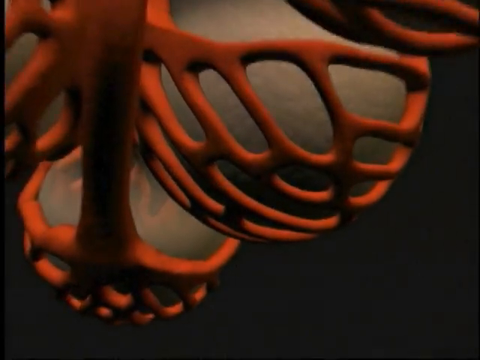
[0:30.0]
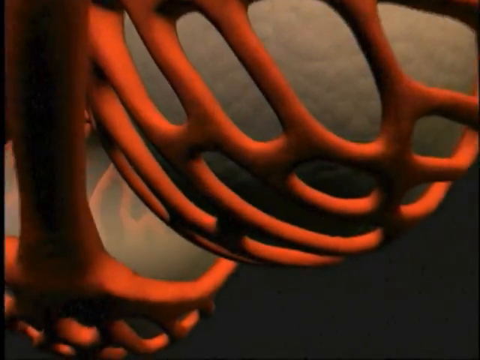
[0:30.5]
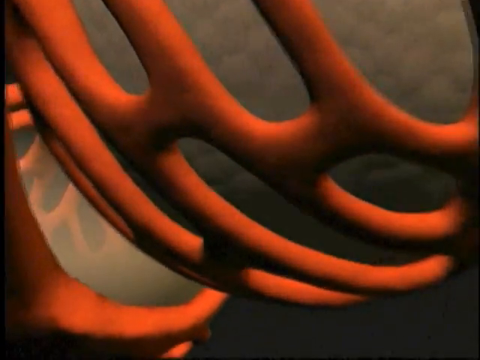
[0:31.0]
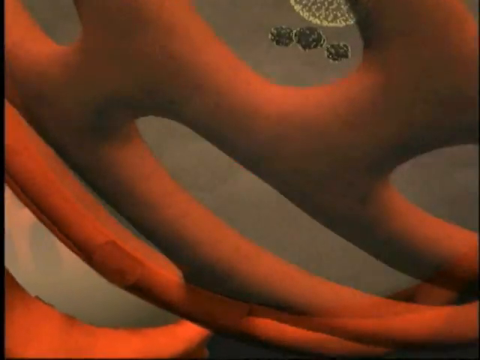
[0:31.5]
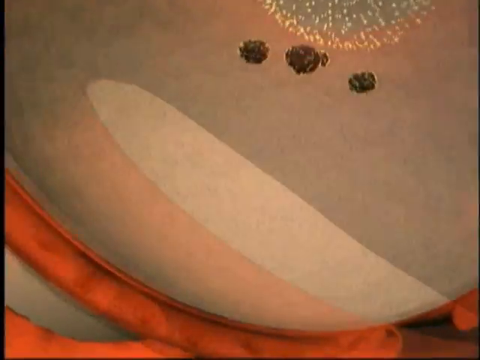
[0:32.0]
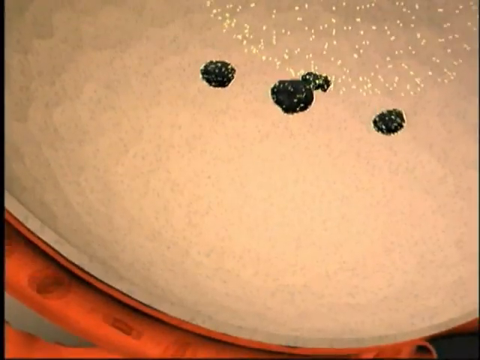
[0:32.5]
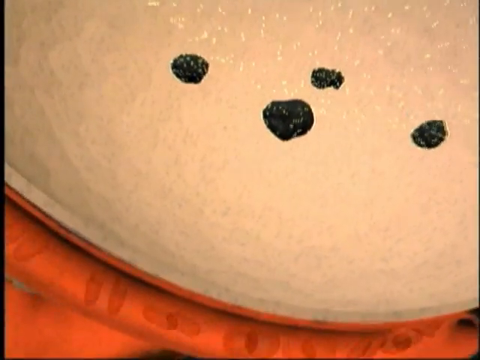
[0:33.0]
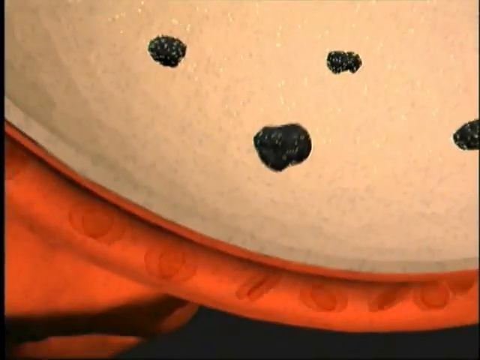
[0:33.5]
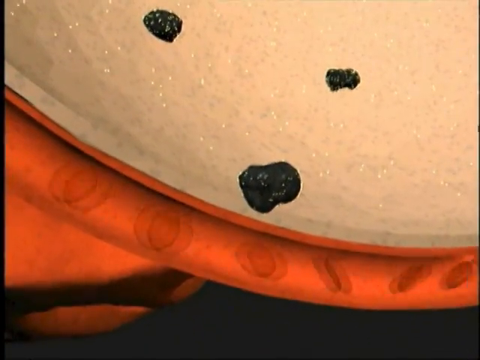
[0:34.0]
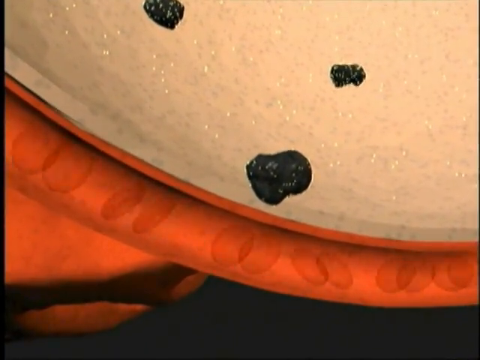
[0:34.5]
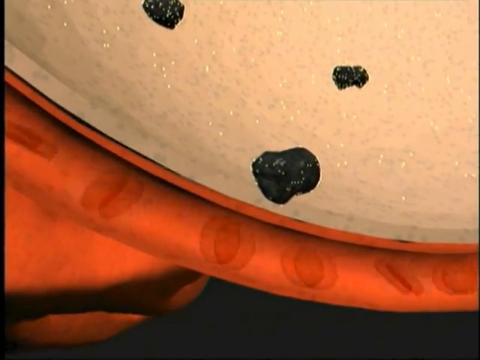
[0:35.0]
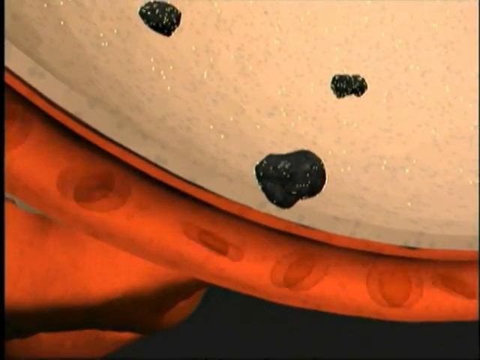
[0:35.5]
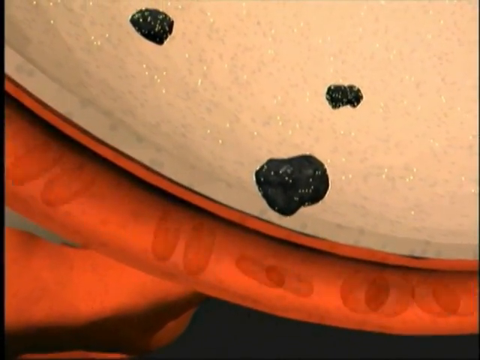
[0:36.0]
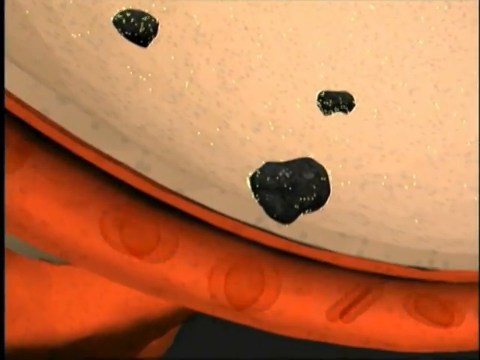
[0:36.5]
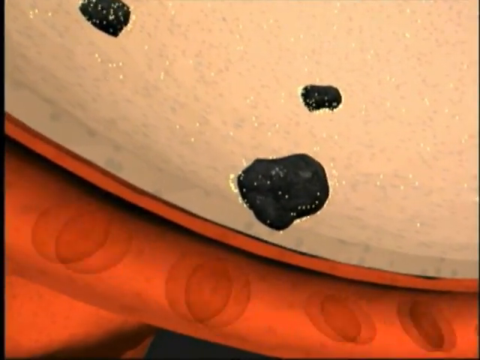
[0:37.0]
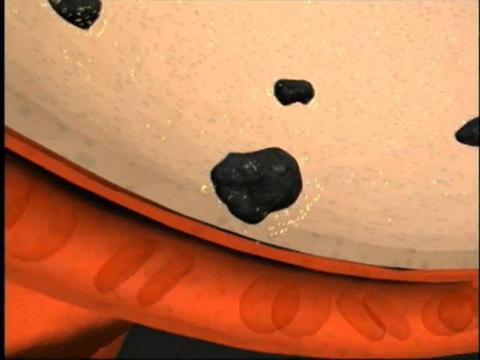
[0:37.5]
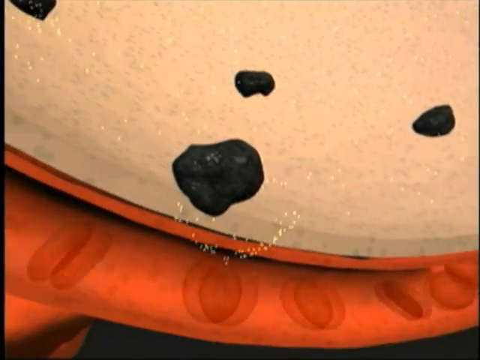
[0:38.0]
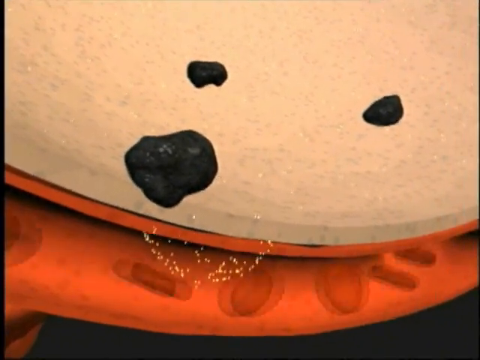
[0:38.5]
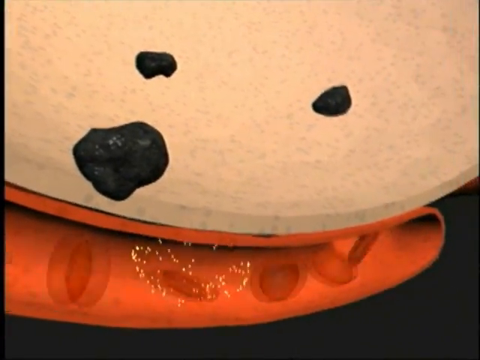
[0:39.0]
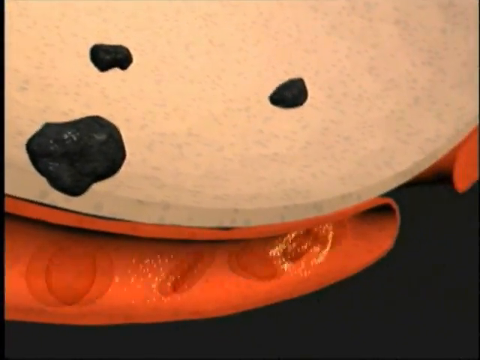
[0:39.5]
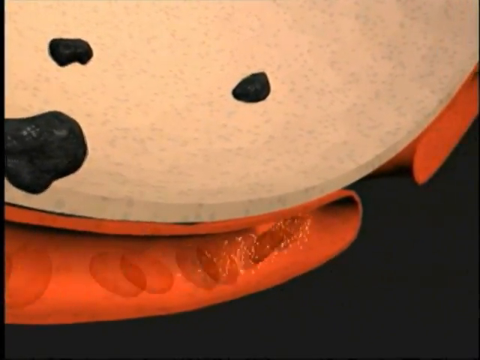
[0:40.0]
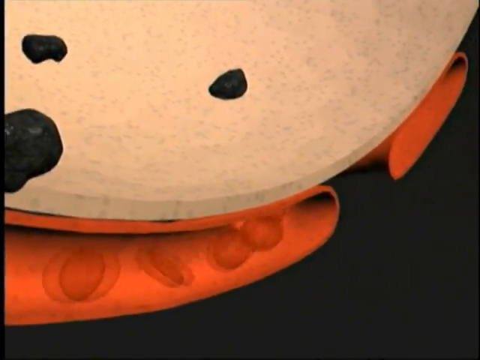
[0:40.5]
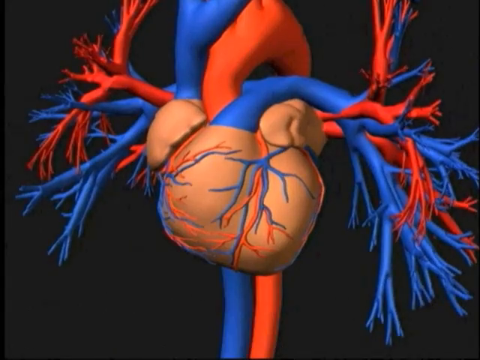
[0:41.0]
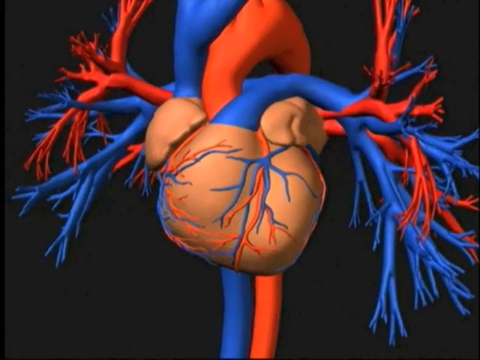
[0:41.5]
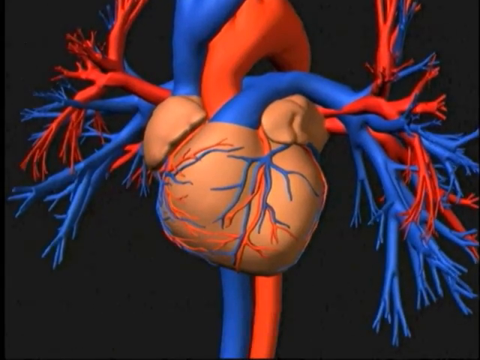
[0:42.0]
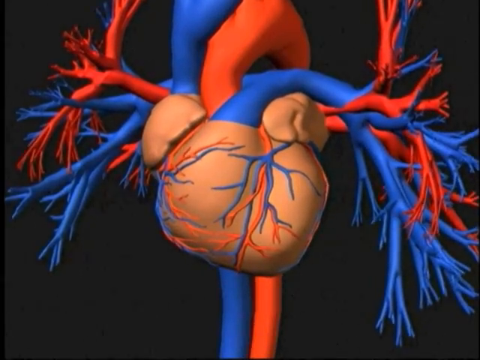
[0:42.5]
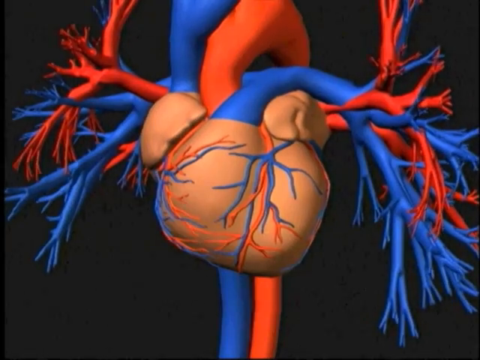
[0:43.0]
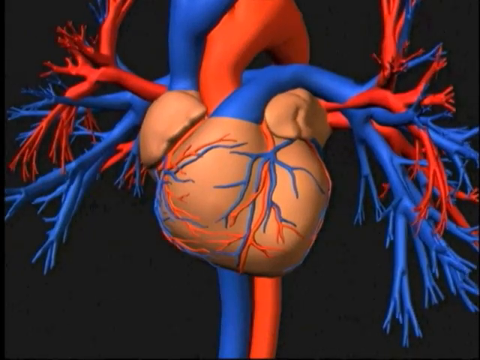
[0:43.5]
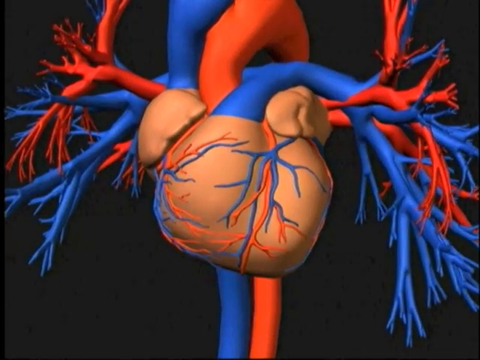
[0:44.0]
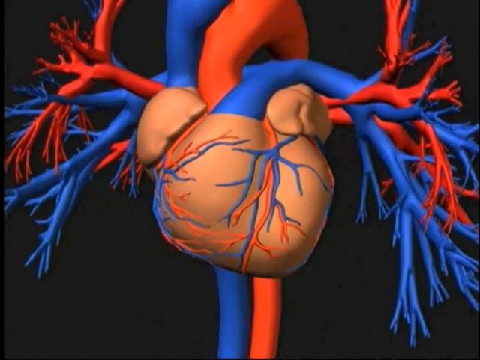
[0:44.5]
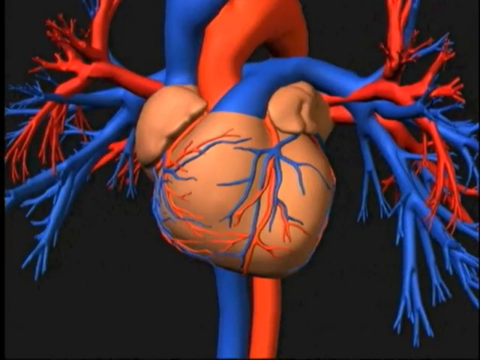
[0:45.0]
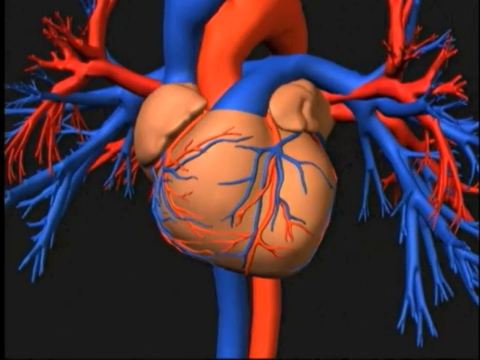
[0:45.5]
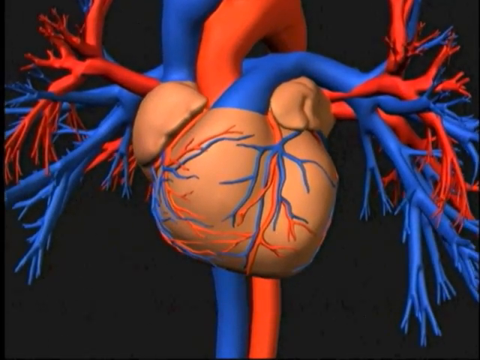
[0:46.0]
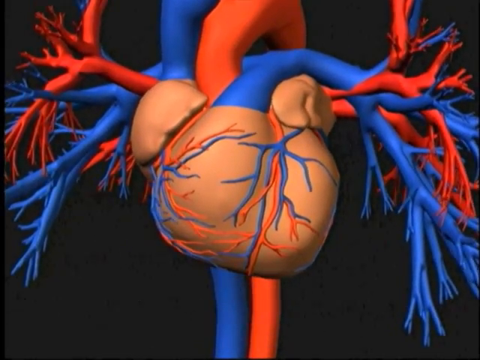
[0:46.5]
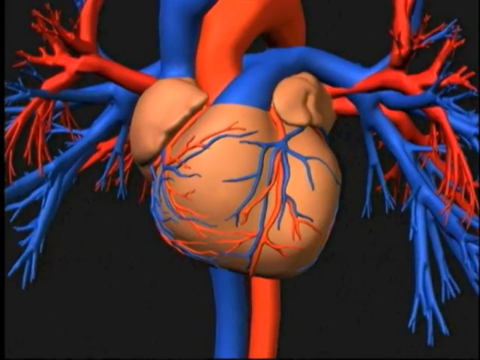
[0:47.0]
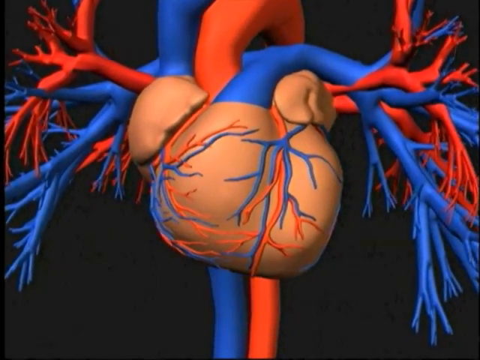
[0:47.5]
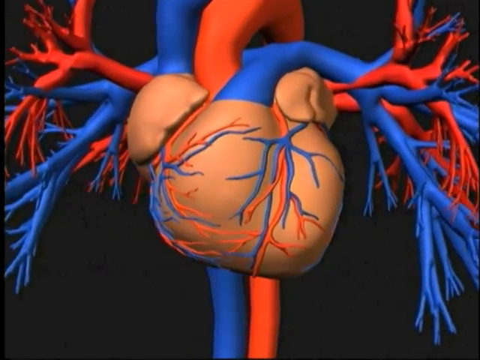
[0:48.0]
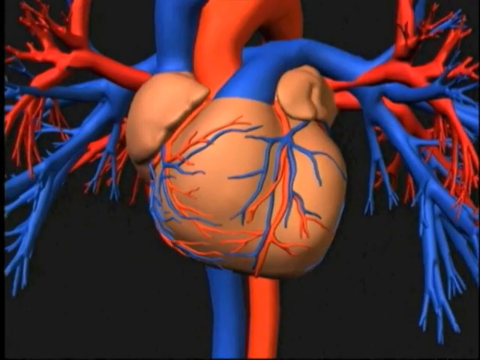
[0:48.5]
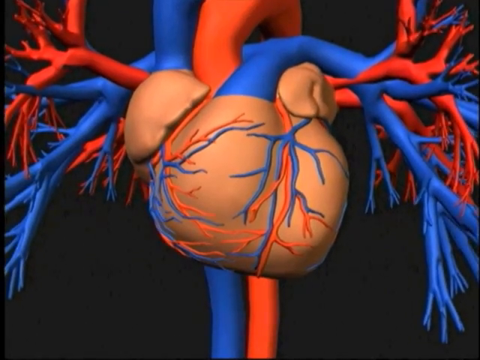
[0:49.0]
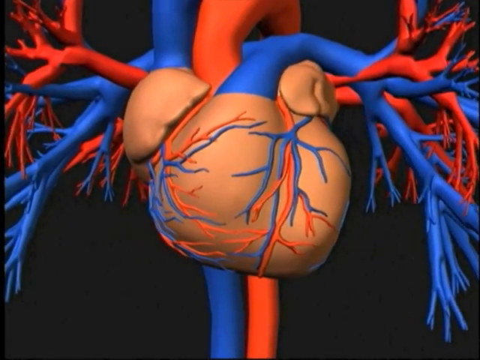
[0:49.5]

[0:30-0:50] The view zooms in on individual molecules or materials, possibly within the smoke or vapor. Then cells appear, including red blood cells moving rapidly, apparently illustrating nicotine affecting the bloodstream. In what appears to be the nicotine, there are hard black rocks of some sort. Yellow appears, sparks fly out, and the rocks give off their own yellow sparks, possibly representing some kind of receptor for dopamine in the brain.